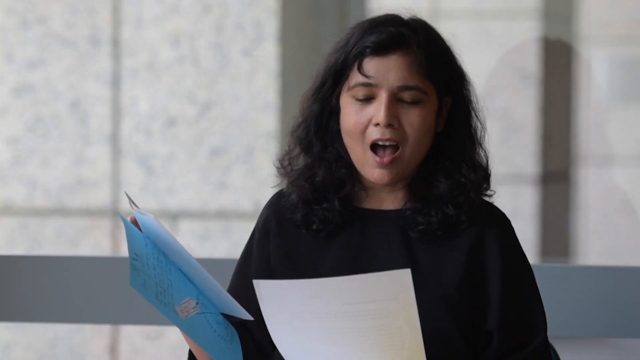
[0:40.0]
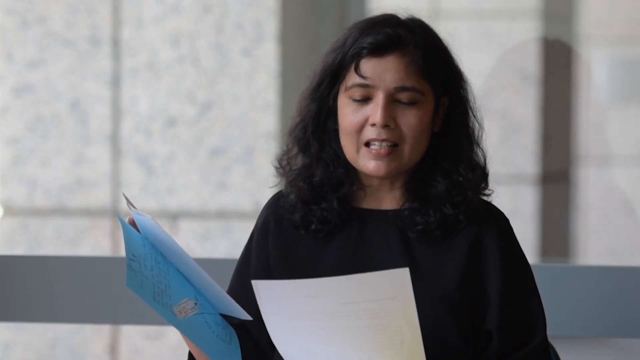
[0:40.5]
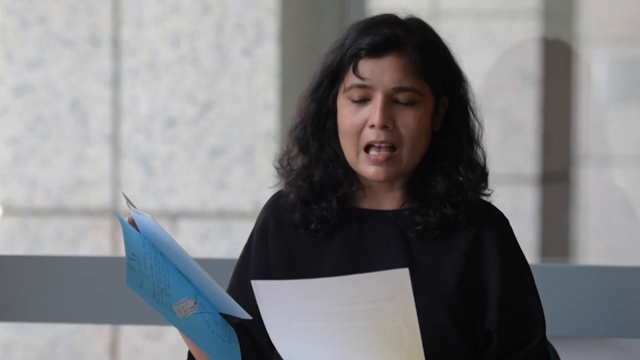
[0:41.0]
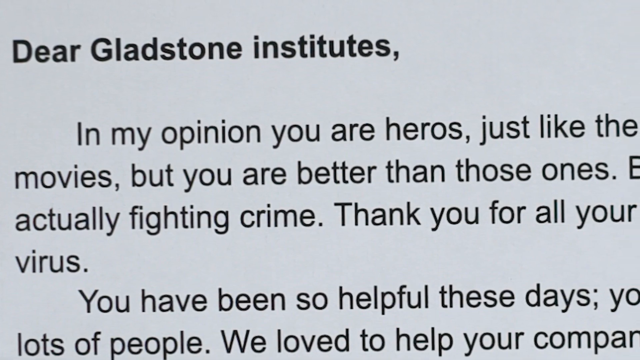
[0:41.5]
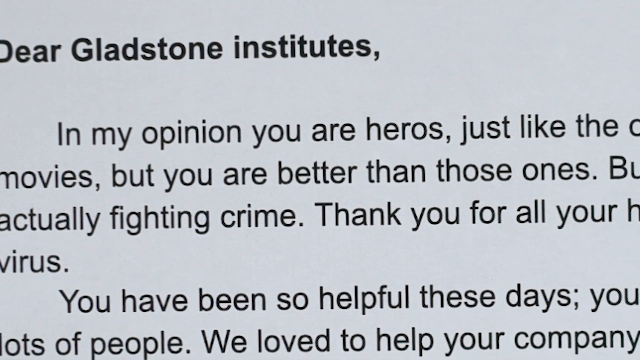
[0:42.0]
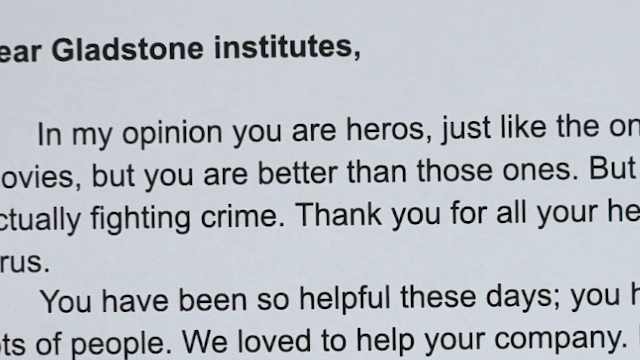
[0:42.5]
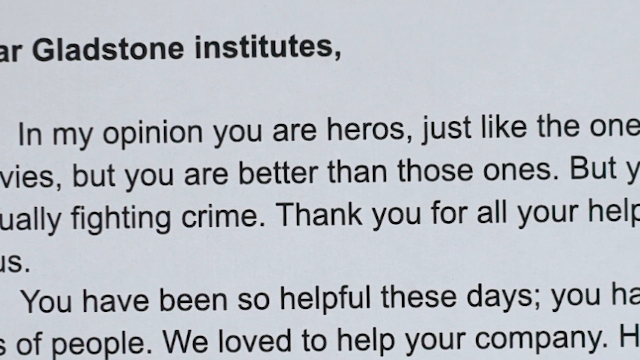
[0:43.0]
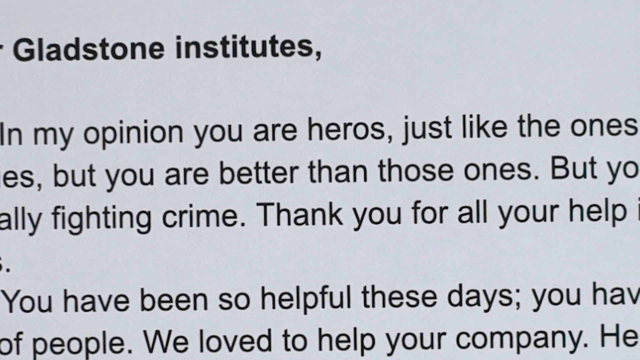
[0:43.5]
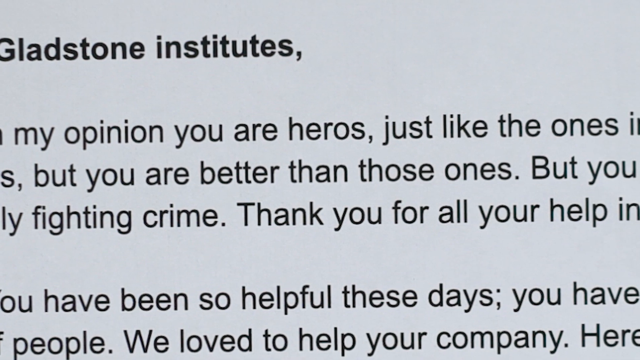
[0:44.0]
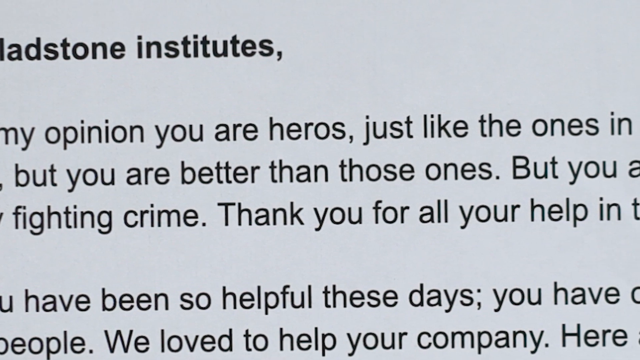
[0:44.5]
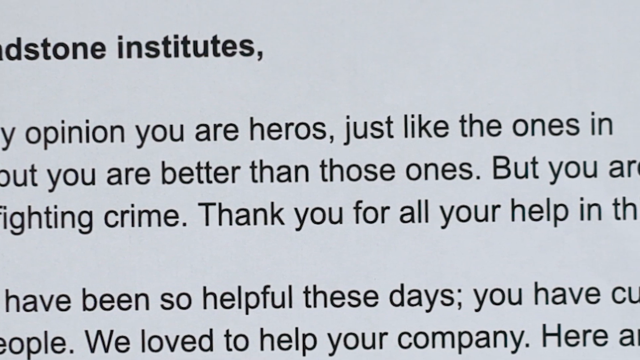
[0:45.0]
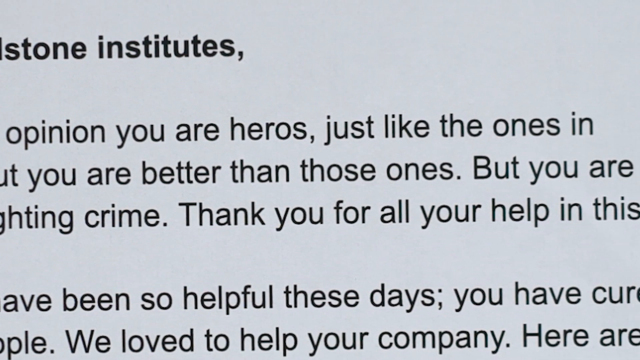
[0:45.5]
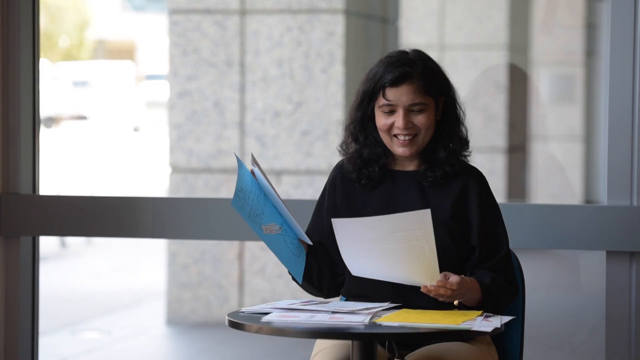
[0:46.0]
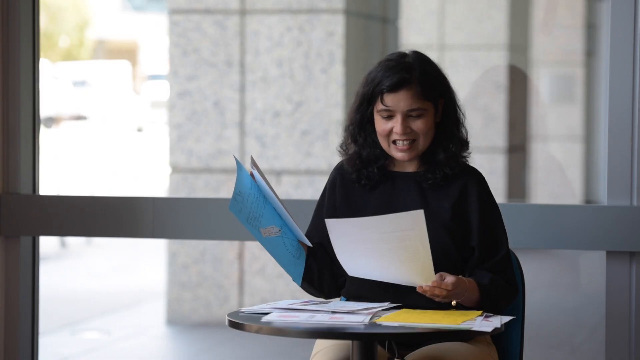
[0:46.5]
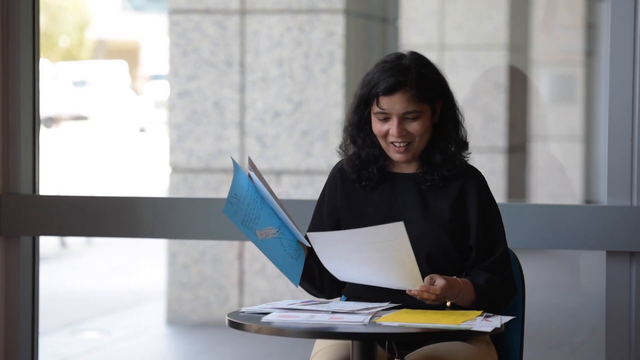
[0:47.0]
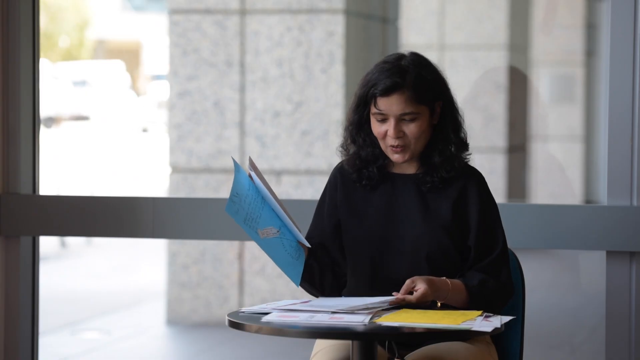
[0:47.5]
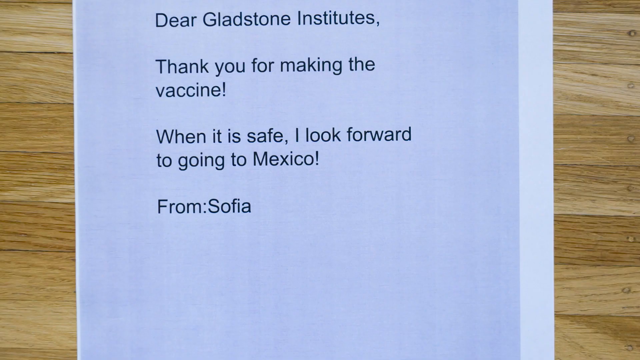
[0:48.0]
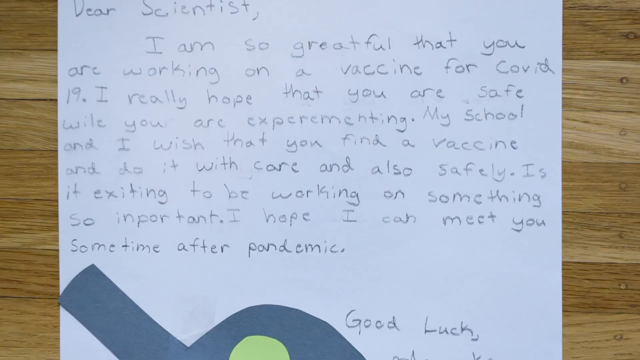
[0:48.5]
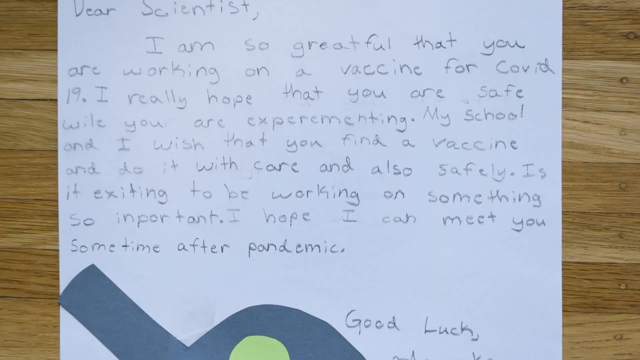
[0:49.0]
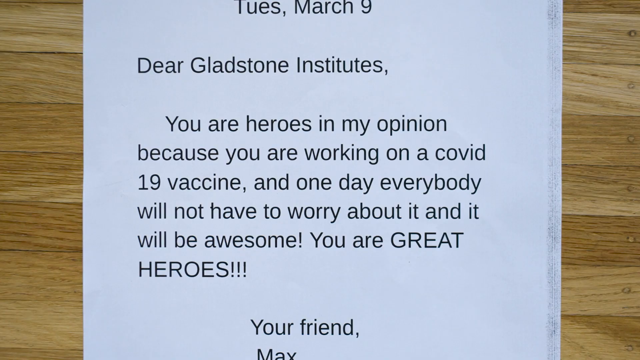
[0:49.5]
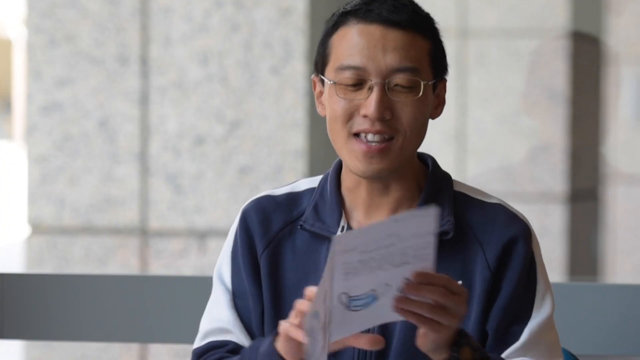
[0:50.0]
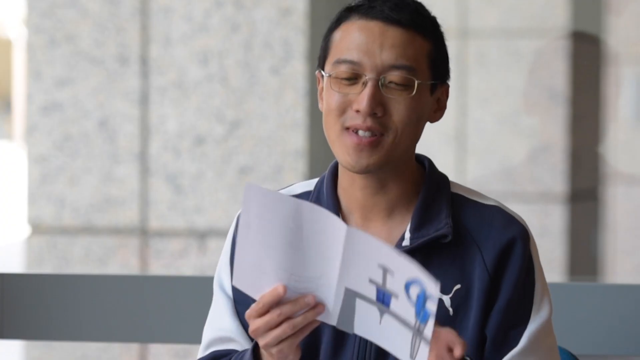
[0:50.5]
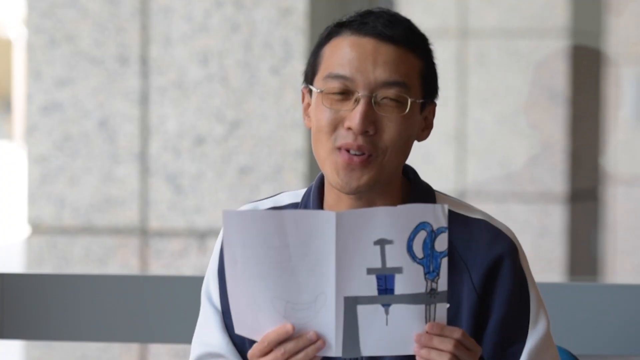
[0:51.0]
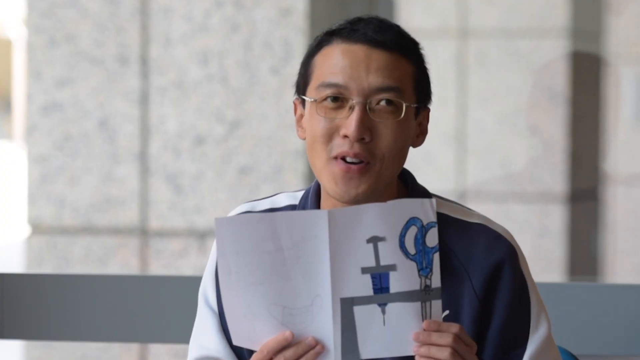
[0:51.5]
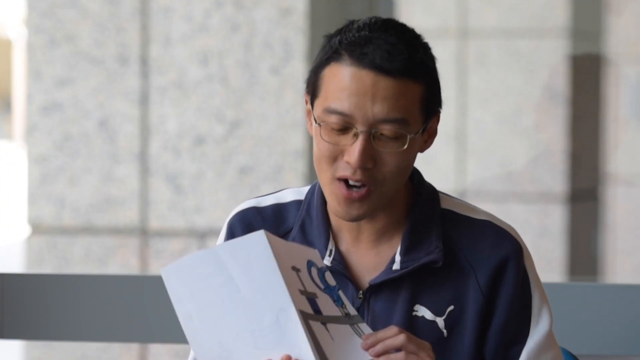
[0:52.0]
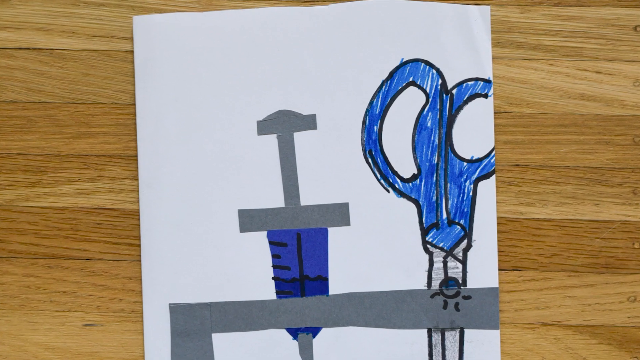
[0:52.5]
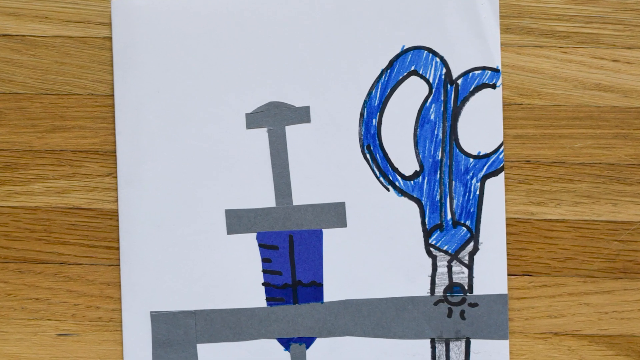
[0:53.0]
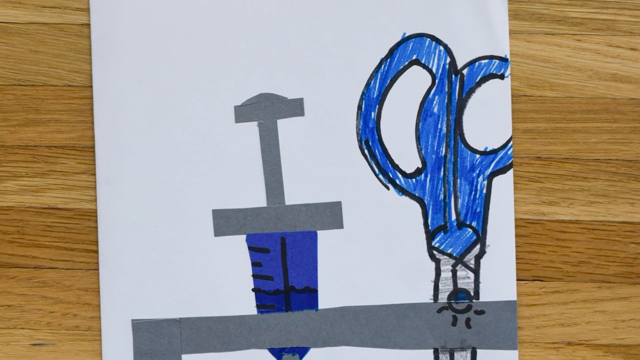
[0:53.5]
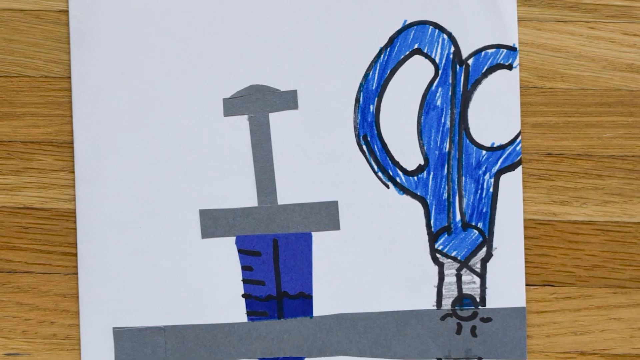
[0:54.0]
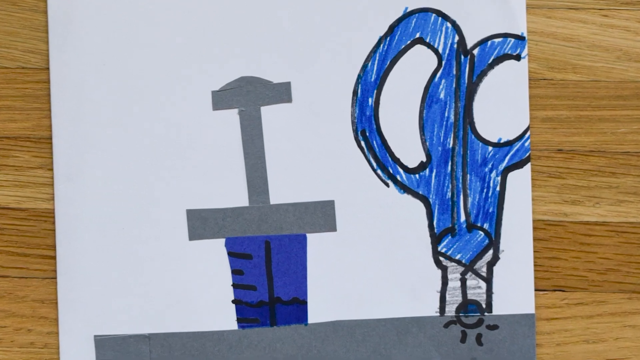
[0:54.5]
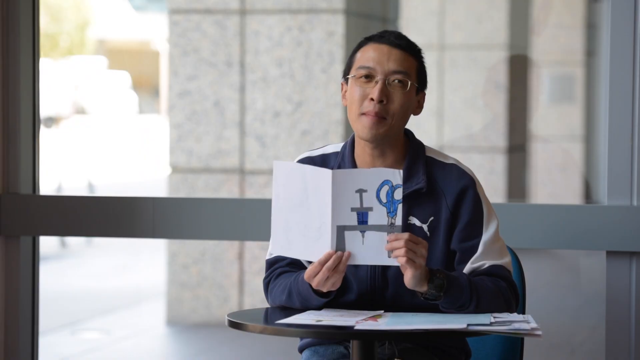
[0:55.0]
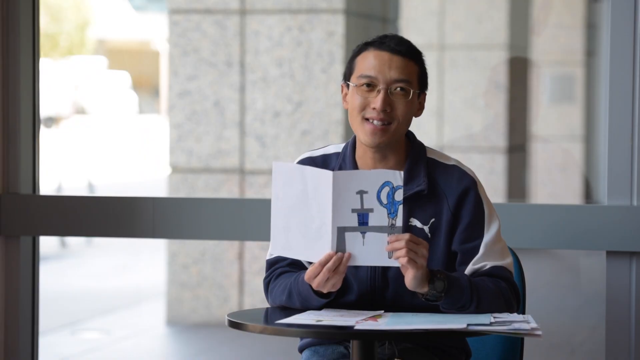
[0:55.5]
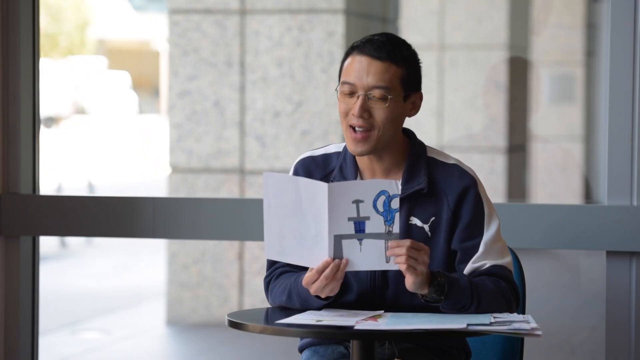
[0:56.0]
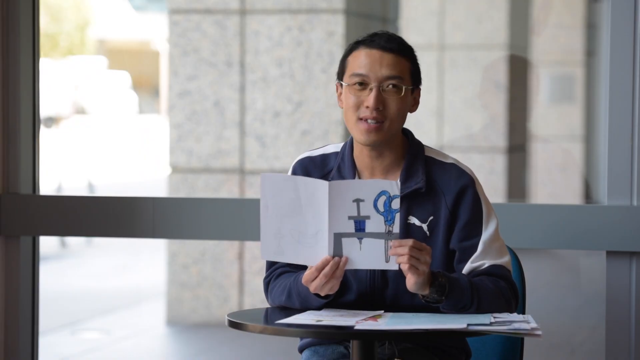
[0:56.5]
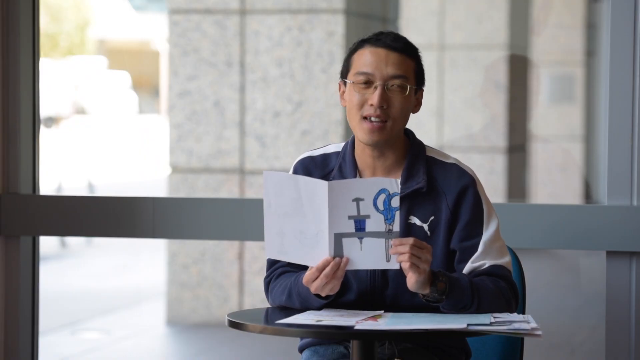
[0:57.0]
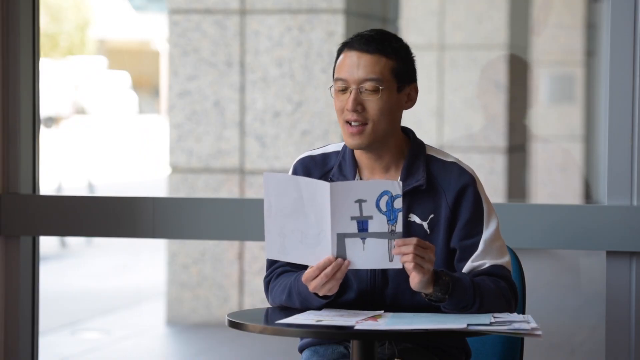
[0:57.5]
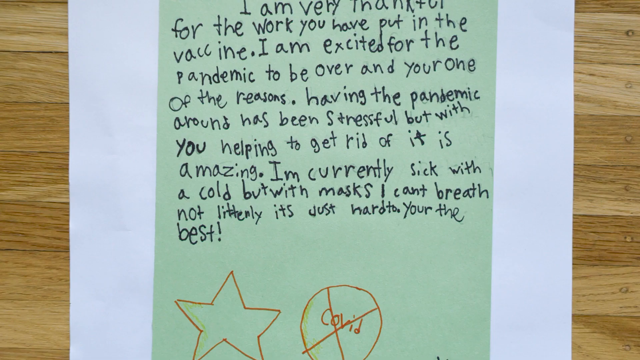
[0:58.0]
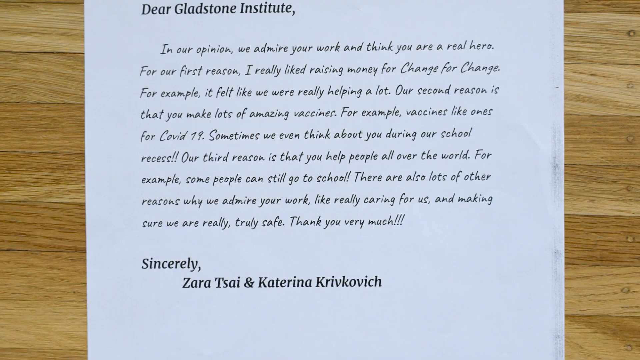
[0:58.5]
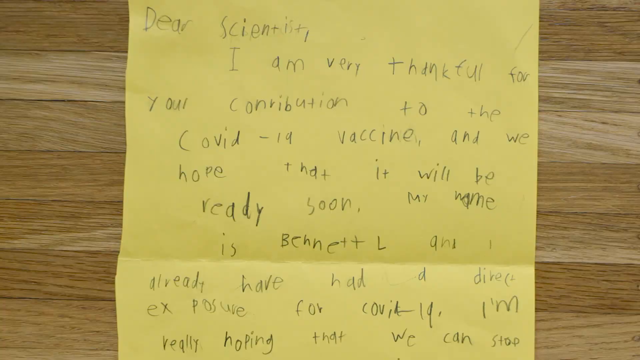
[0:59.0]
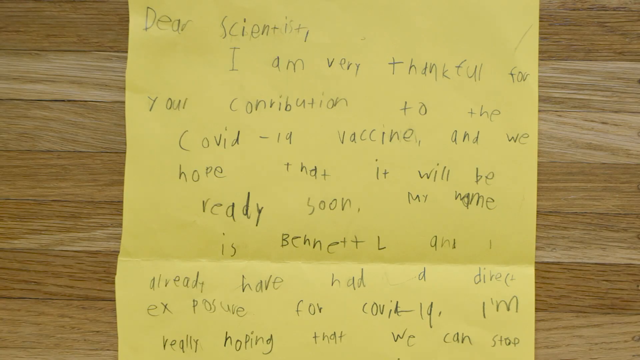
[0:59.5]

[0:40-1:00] Indoors, a young woman in a dark-colored sweater looks down and talks, apparently holding something in her hand. The view changes to writing on a white page that says "Dear Gladstone Institutes" followed by more text, with a slight pan from left to right to left. After a moment of reading, the view returns to the young woman, who holds a piece of paper in her left hand and a blue folder in her right. She smiles, looks down at the white paper, and gently rests it on a table with her left hand. The view goes back to the white paper, showing further writing, then switches to a brief montage of two or three other documents, some handwritten and some typed.